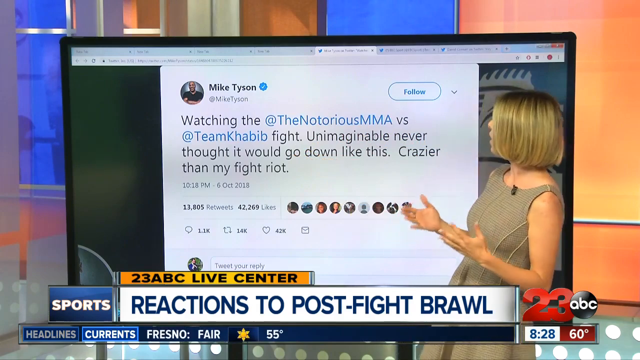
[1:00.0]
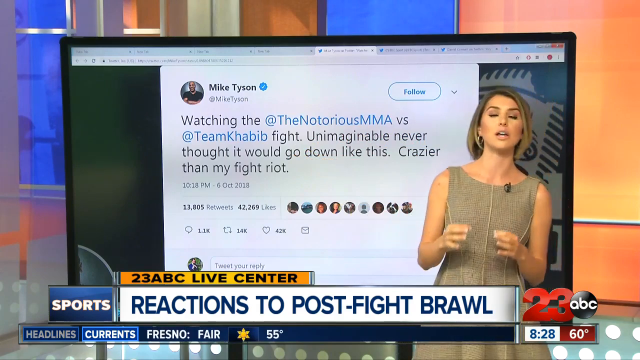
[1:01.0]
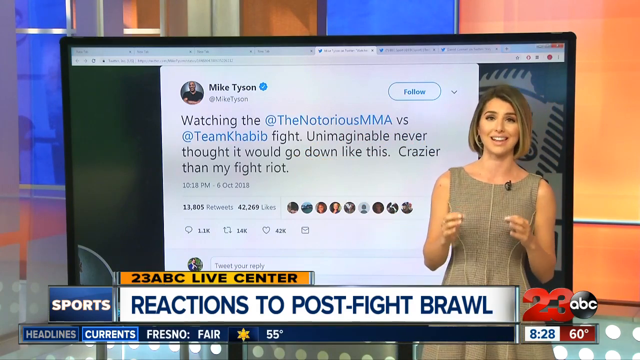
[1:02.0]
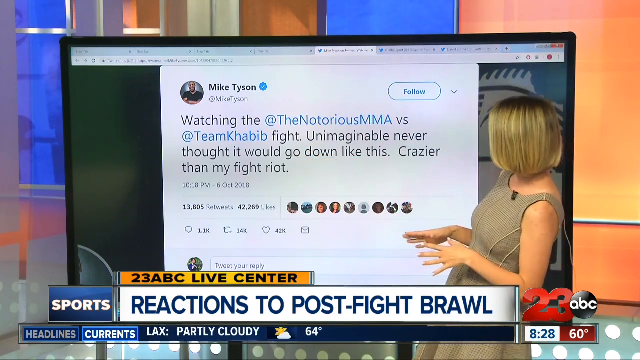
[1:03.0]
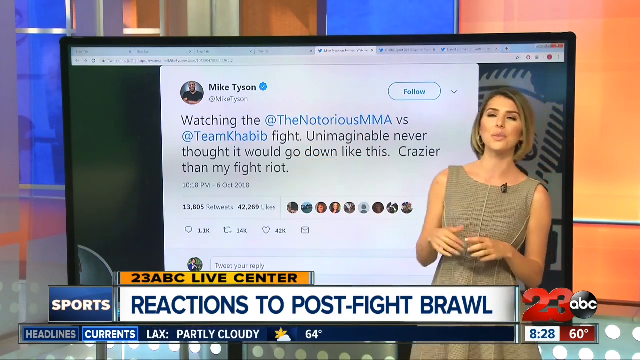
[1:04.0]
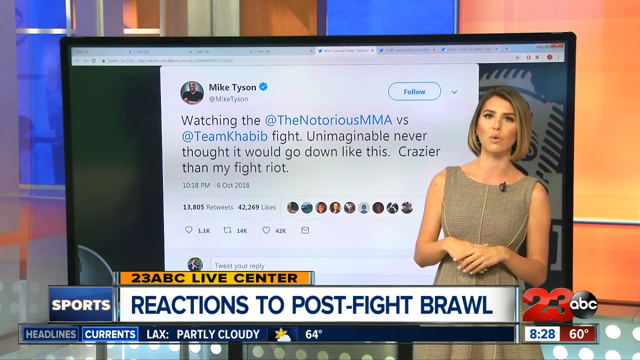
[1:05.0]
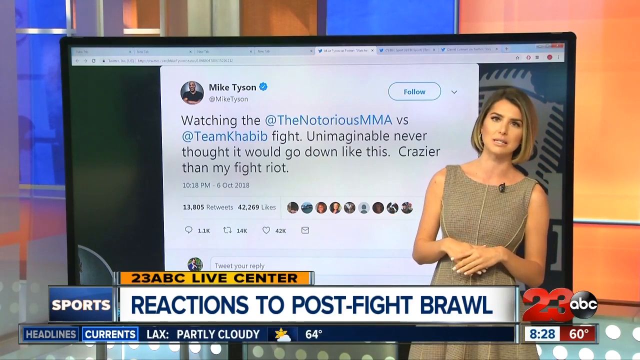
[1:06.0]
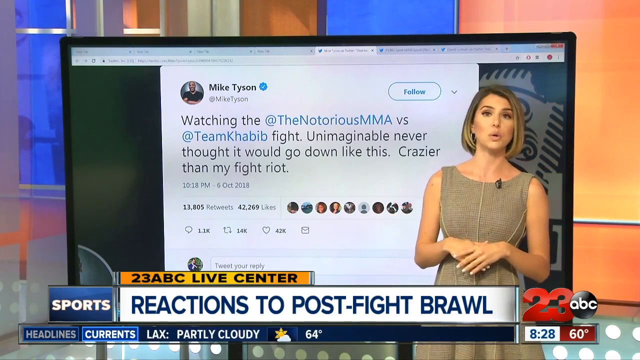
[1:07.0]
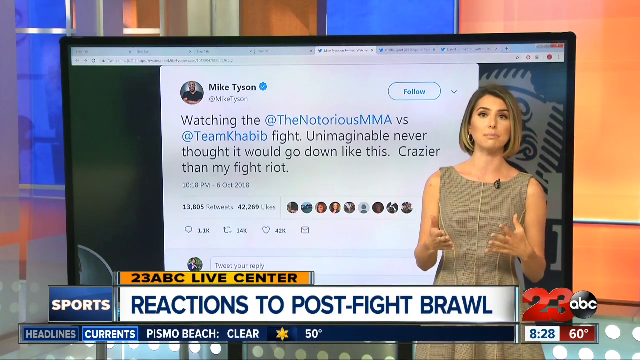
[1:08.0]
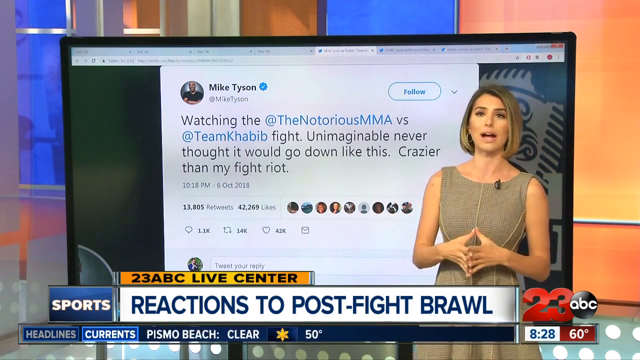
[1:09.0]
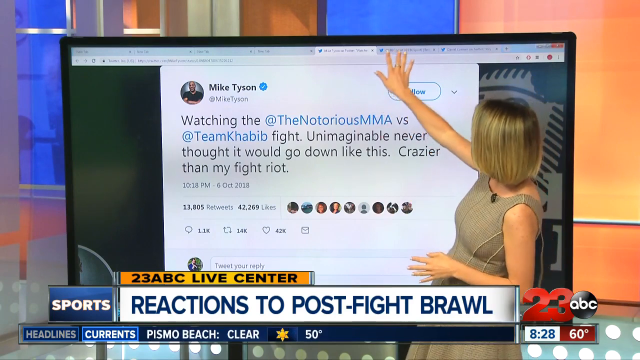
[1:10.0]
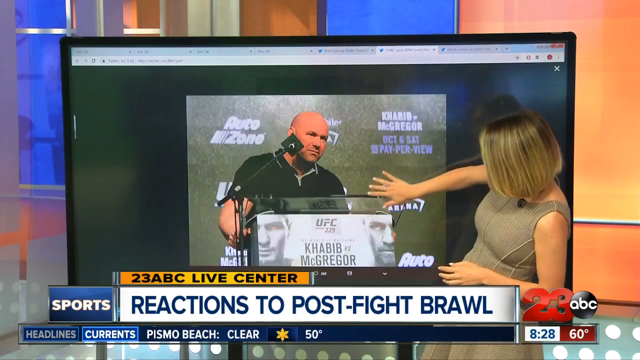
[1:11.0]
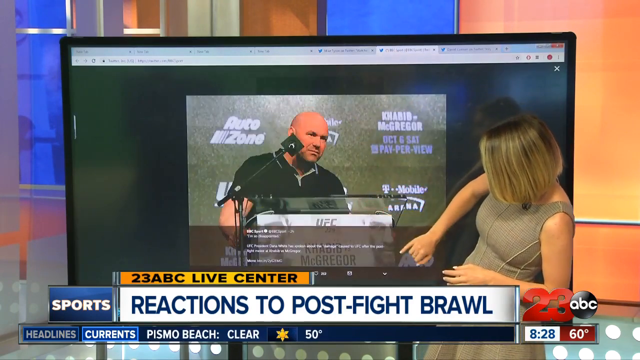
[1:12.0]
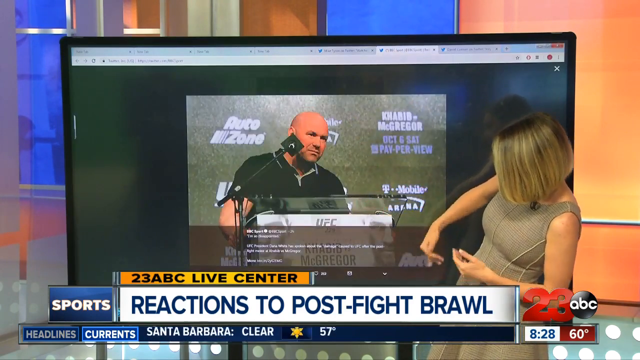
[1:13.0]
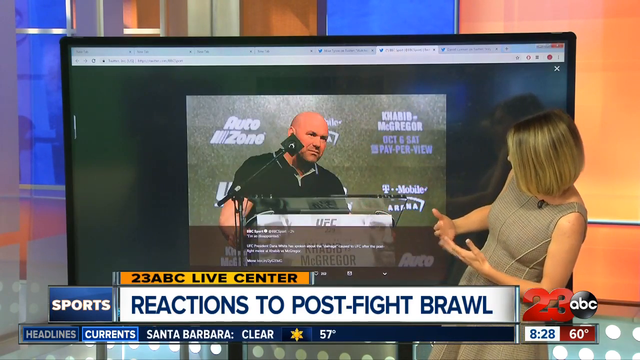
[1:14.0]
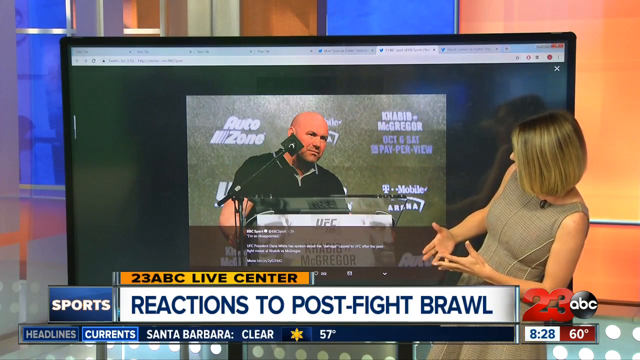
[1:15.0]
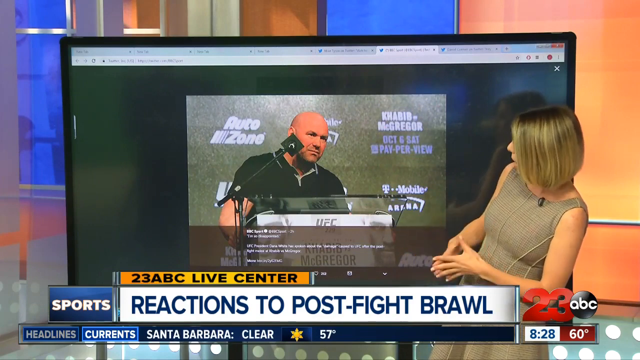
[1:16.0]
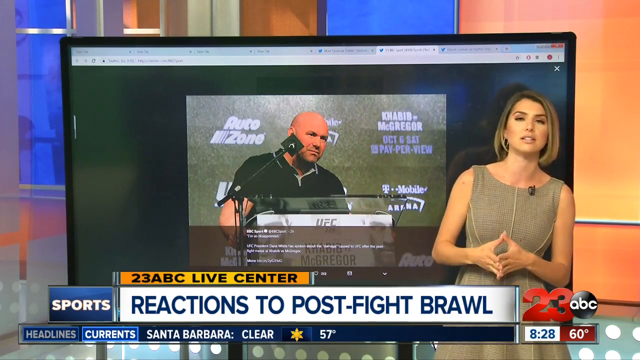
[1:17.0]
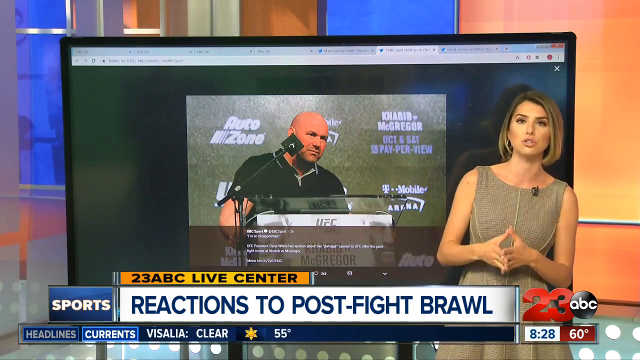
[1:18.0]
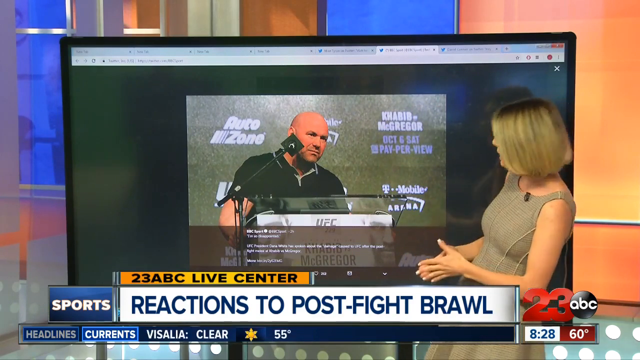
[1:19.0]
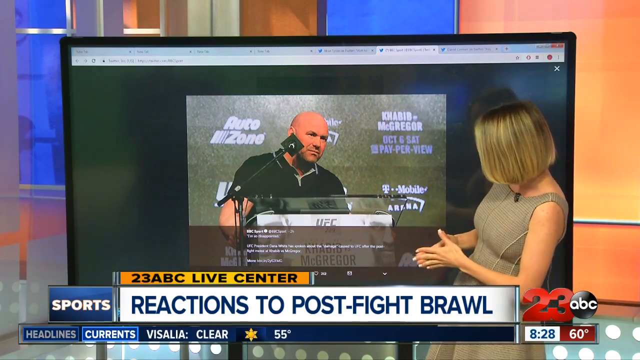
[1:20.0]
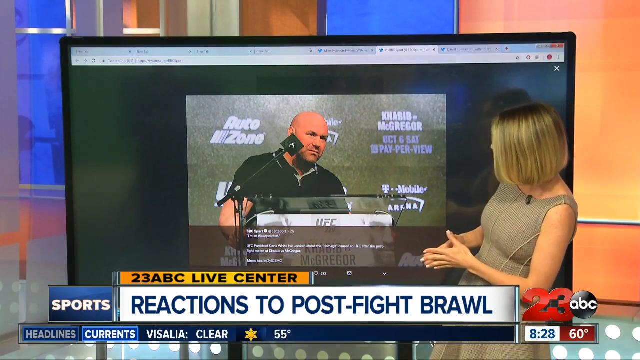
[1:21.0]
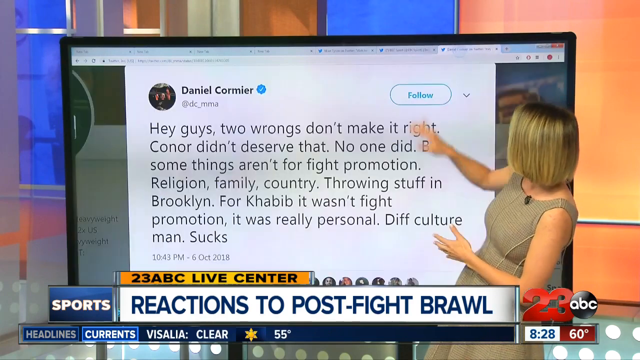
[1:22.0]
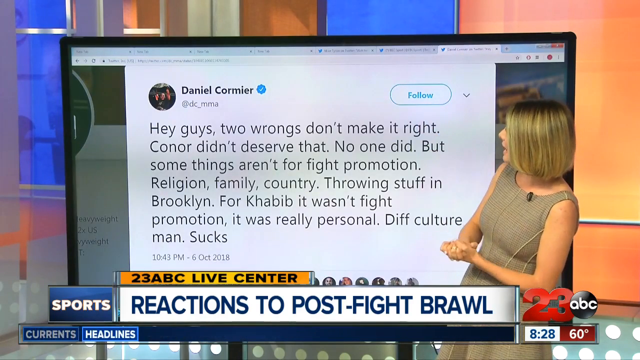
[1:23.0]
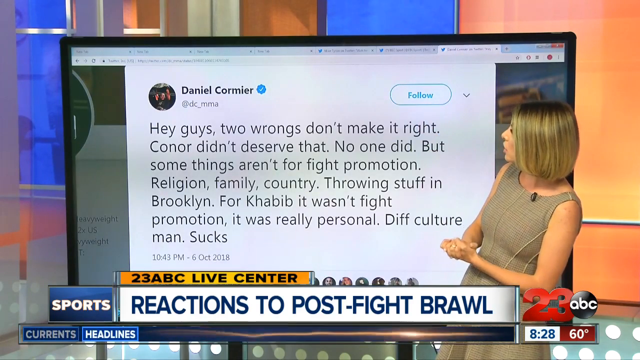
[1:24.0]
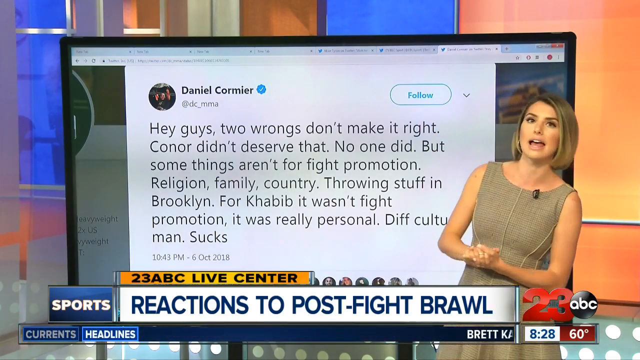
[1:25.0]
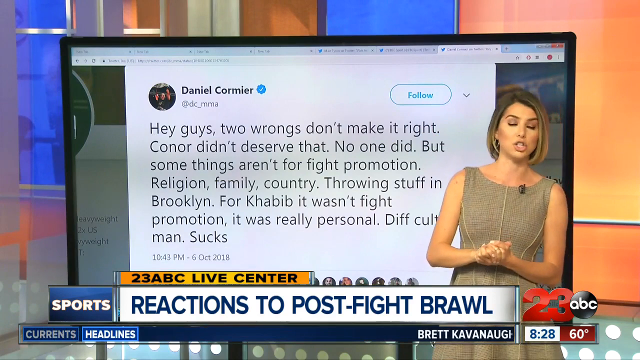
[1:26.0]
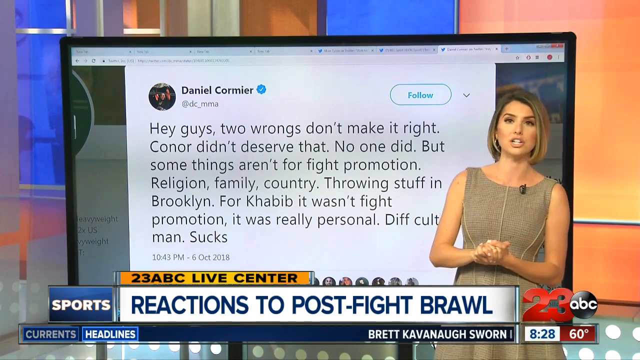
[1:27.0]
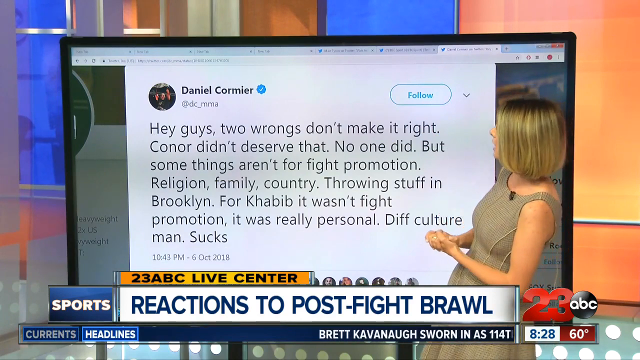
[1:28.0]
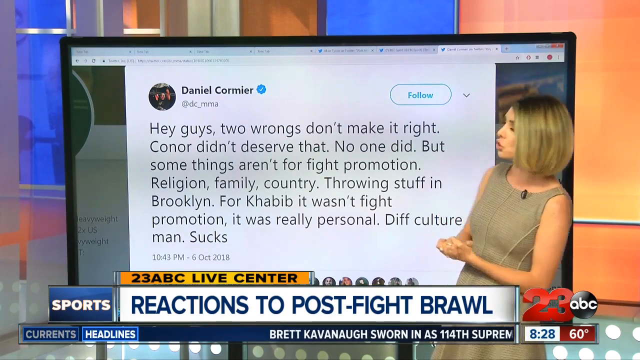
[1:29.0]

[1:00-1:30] Another post appears, reading in part "never thought it would go down like this," by Tyson, showing about 14,000 followers and over 22,000 likes, along with some of the people who liked it and options to like or comment. The graphic reads "23 ABC live center" with post-brawl reactions. The woman stands by a big TV-type screen, pointing out what happened and apparently giving her opinion on the comments. Another post reads "hey guys two wrongs don't make it right Connor didn't deserve that no one did."